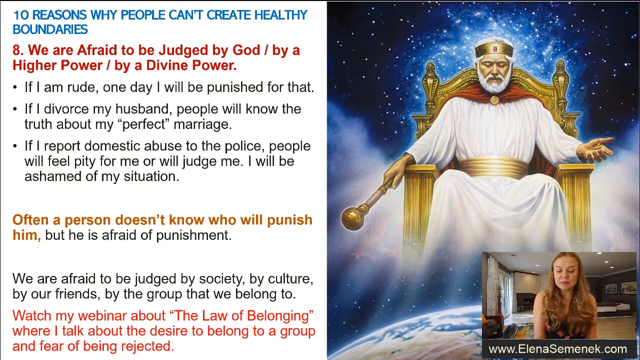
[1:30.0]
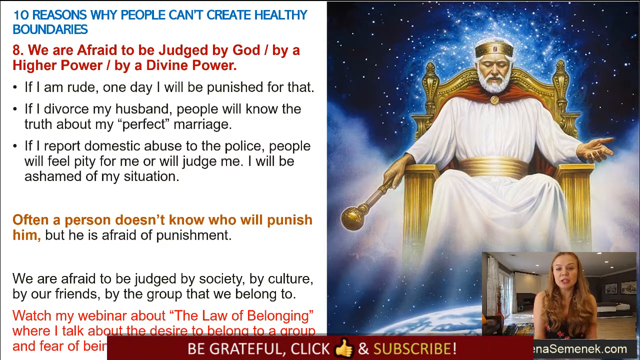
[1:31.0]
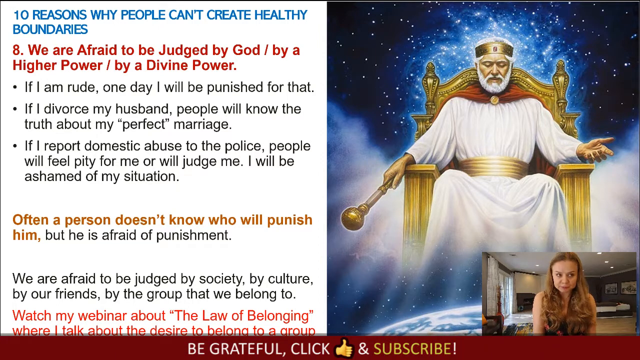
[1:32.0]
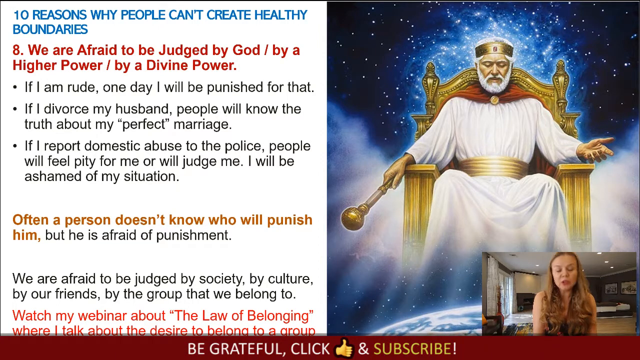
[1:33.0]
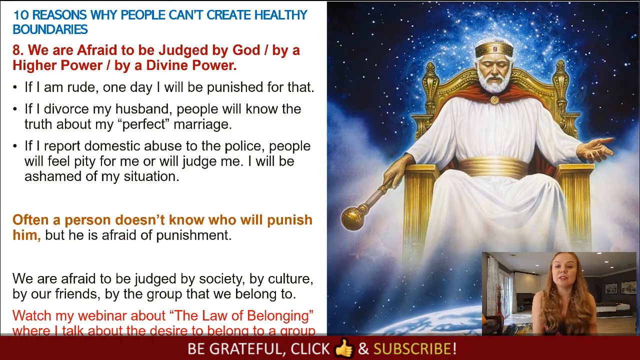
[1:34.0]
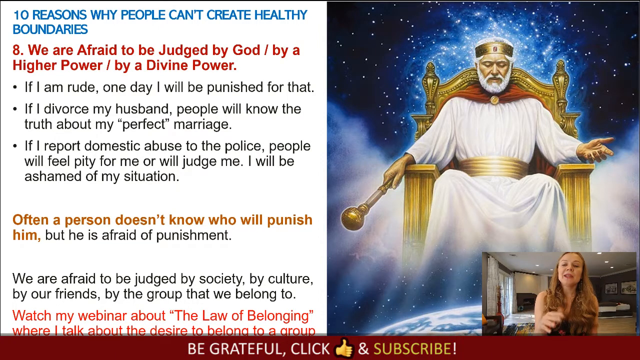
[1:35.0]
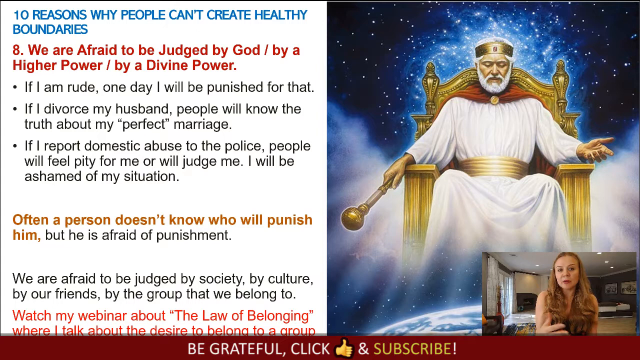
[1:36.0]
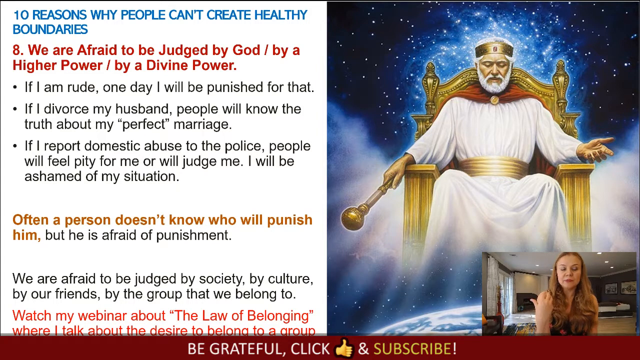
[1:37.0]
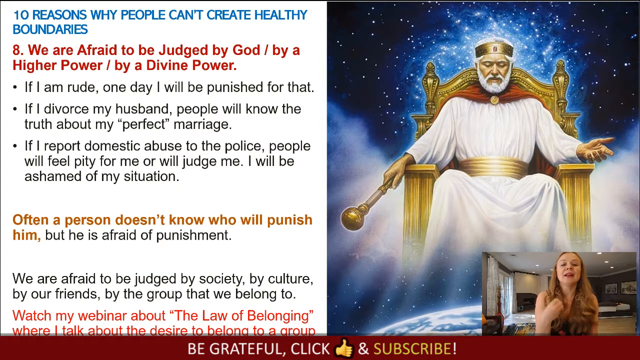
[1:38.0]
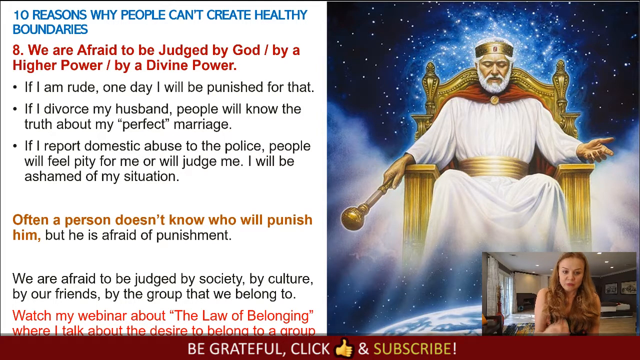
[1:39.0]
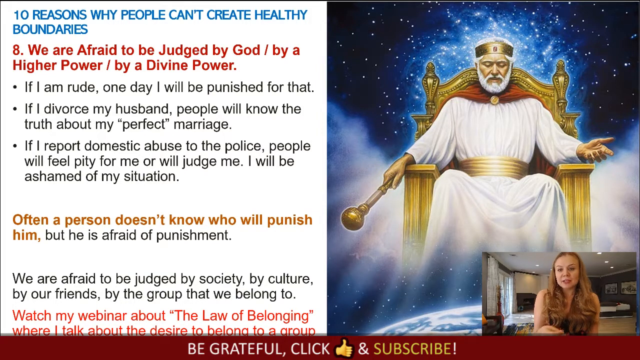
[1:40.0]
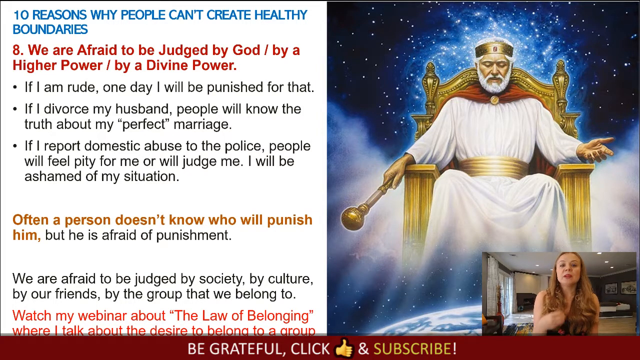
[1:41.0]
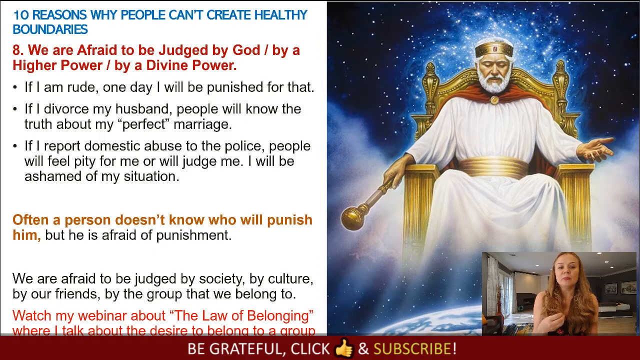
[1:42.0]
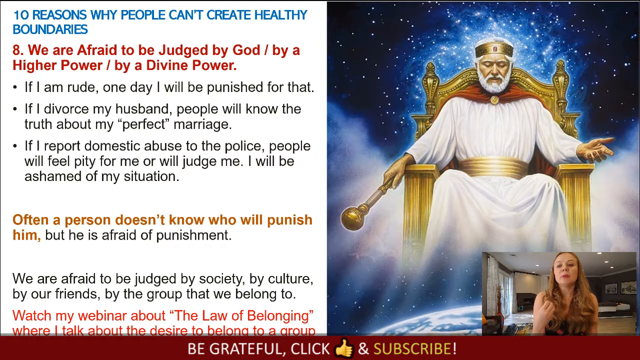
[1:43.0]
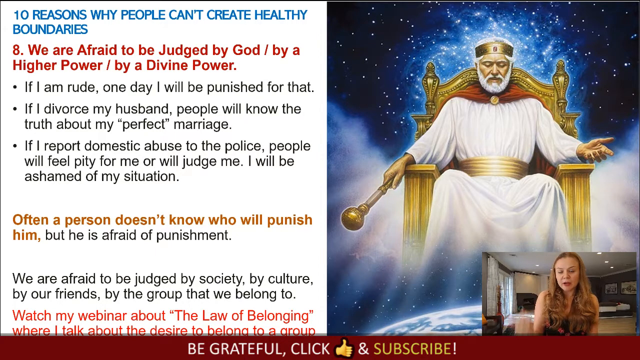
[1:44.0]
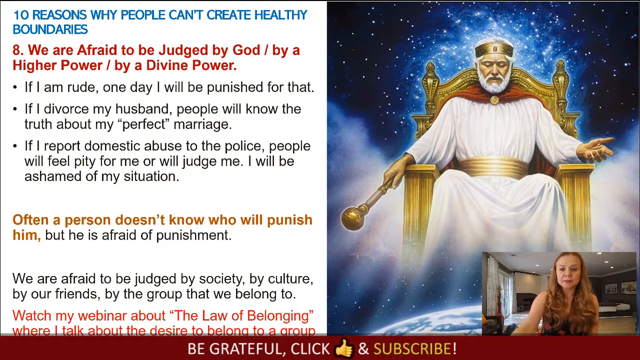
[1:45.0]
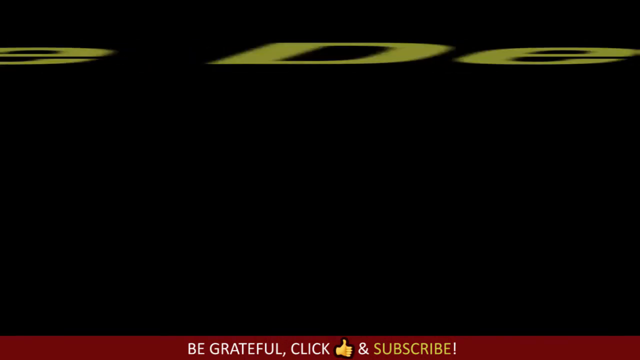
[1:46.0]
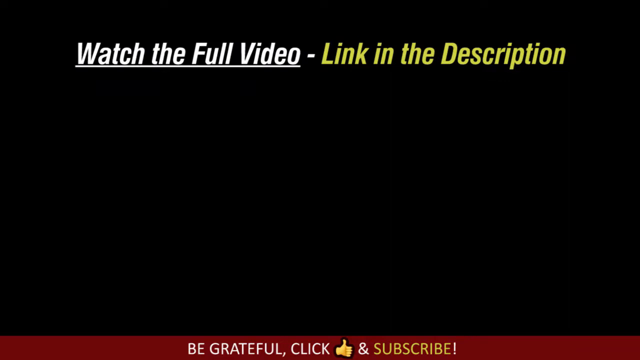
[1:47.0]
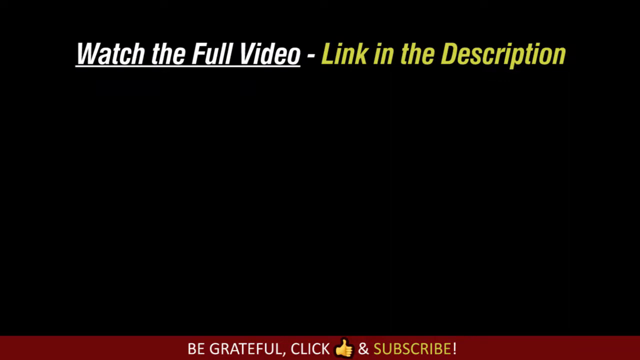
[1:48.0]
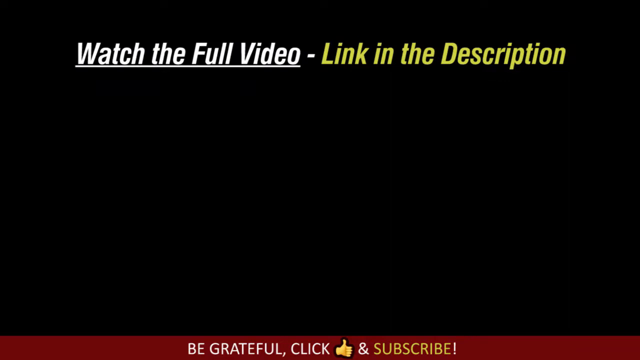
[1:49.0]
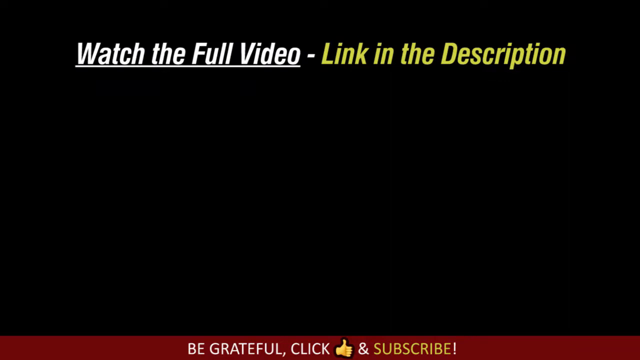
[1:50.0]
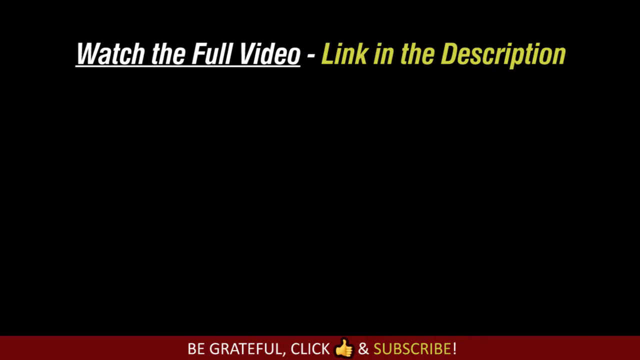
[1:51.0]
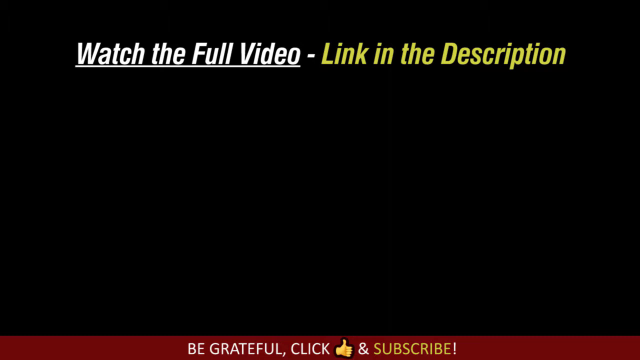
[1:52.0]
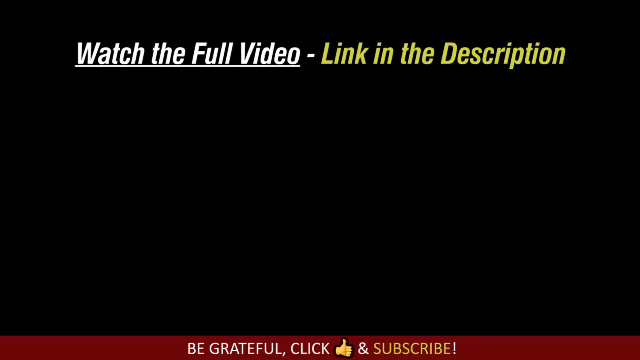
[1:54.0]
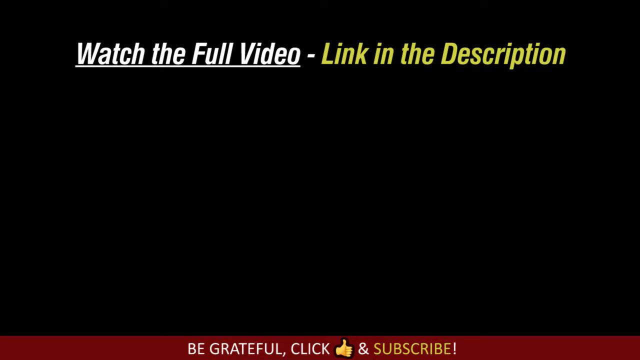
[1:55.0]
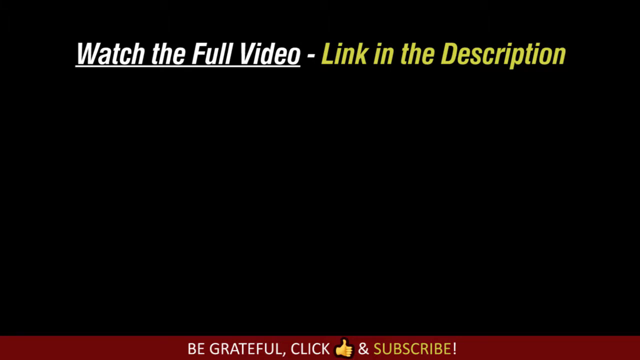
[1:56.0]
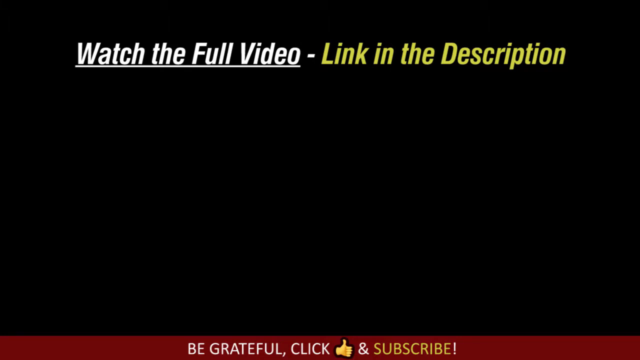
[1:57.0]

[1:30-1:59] In the bottom right-hand corner of the screen is a smaller video screen showing a blonde-haired woman in a black tank top with orange and red spots. Along the bottom of that video it says "www.elanaseminic.com". There is a large golden throne with a man sitting on it, wearing a gold belt around a white robe. He has a thick white mustache, beard and white hair, wears a gold crown, and holds a golden spear in his right hand. Behind him are outer space and stars. The left half of the screen is white, and at the top it reads: "Ten reasons why people can't create healthy boundaries. We are afraid to be judged by God, by a higher power, by a divine power. If I am rude one day I will be punished for that. If I divorce my husband people will know the truth about my perfect marriage. If I report domestic abuse to the police people will feel pity for me or will judge me. I will be ashamed of my situation. Often a person doesn't know who will punish him, but he is afraid of punishment. We are afraid to be judged by society, by culture, by our friends, by the group that we belong to." Underneath, written in red, it says "watch my webinar about the law of belonging where I talked about the desire to belong to a group and fear of being rejected".